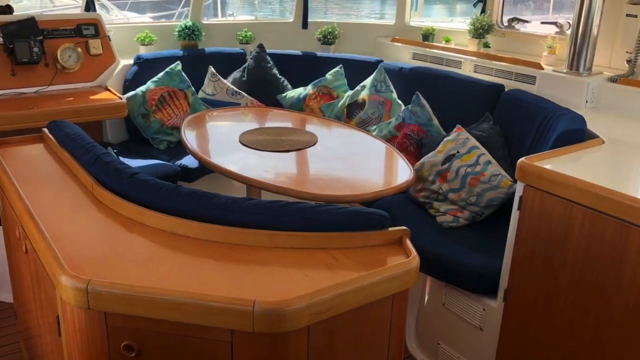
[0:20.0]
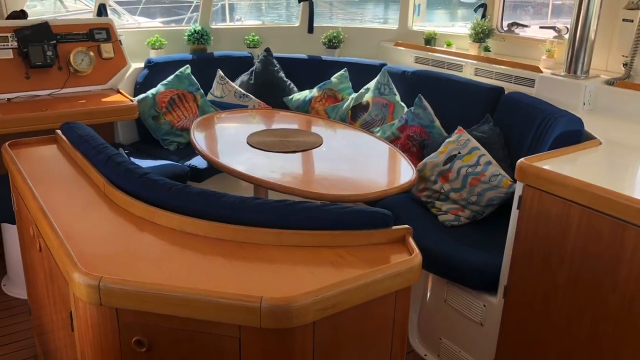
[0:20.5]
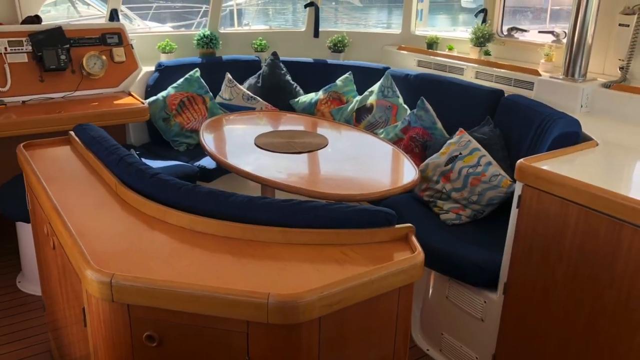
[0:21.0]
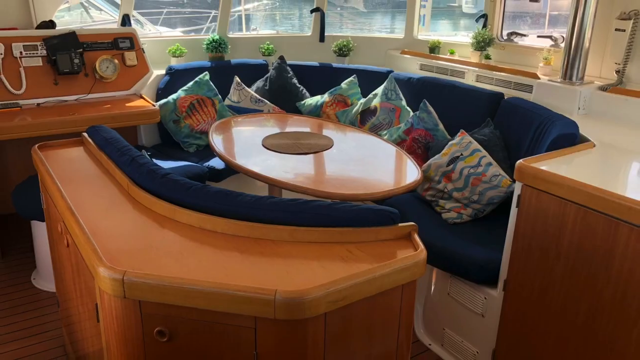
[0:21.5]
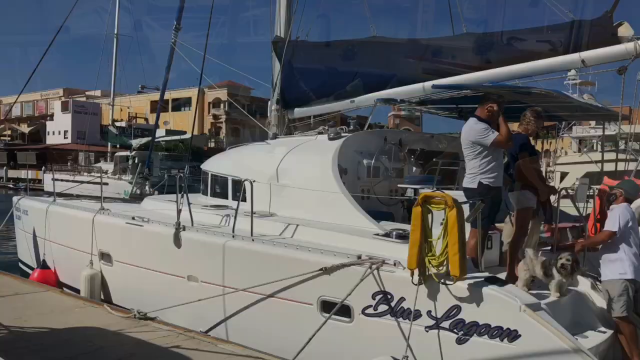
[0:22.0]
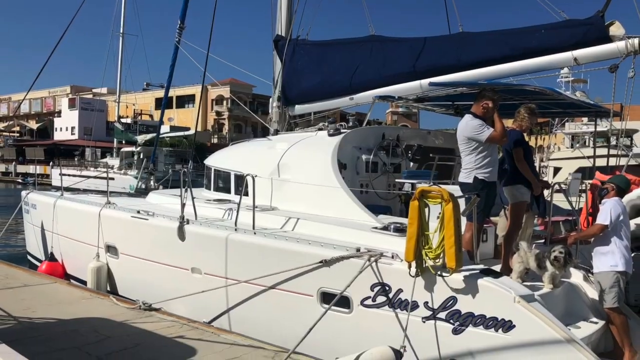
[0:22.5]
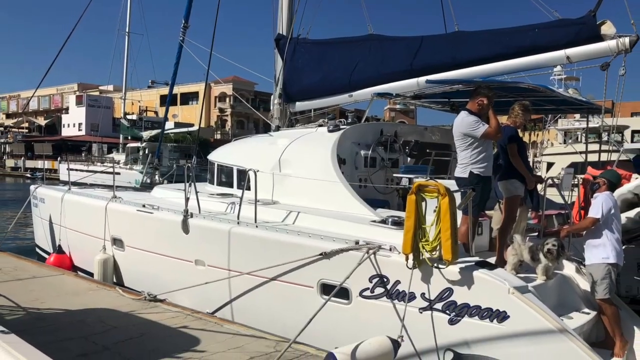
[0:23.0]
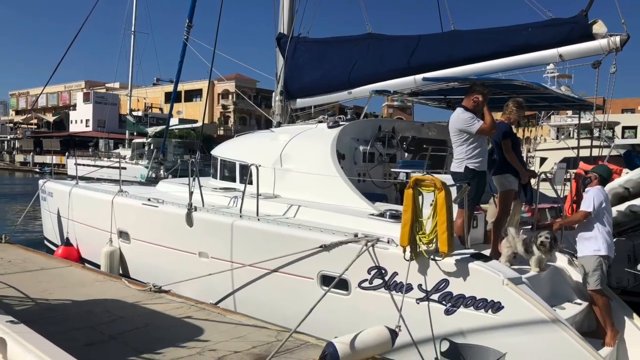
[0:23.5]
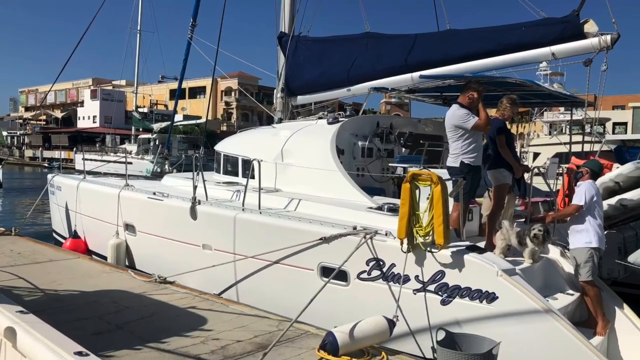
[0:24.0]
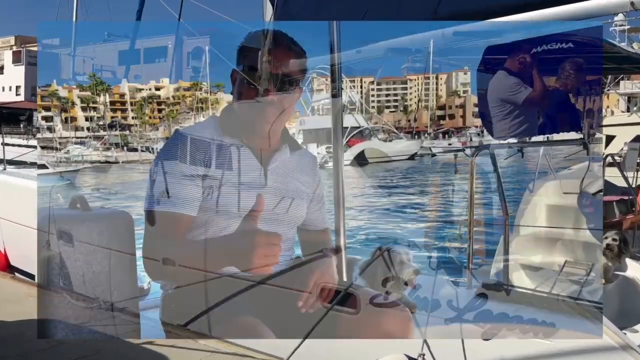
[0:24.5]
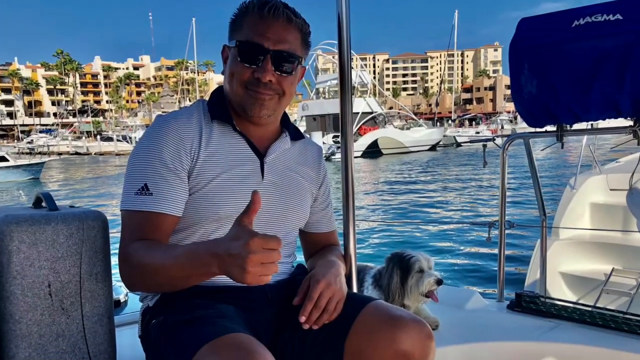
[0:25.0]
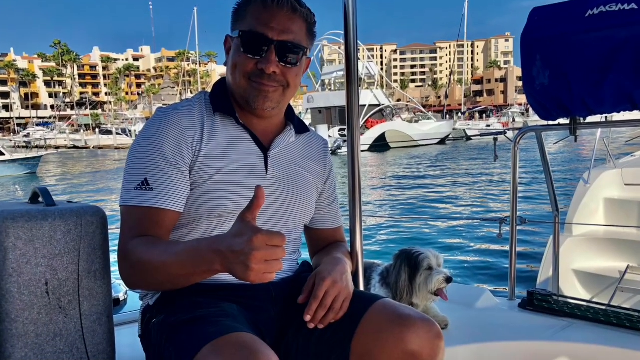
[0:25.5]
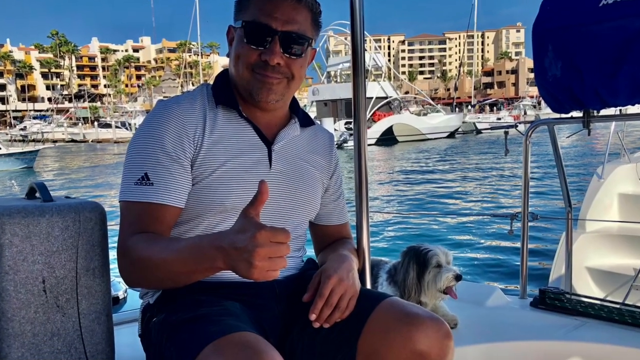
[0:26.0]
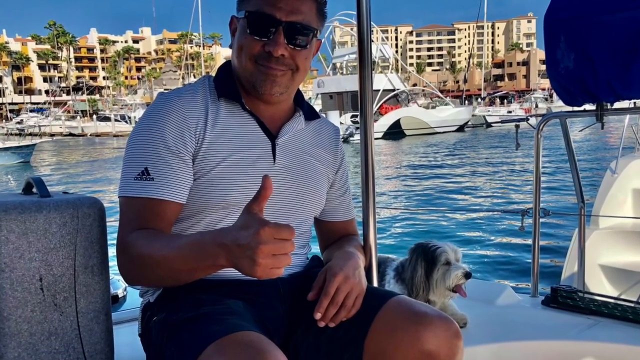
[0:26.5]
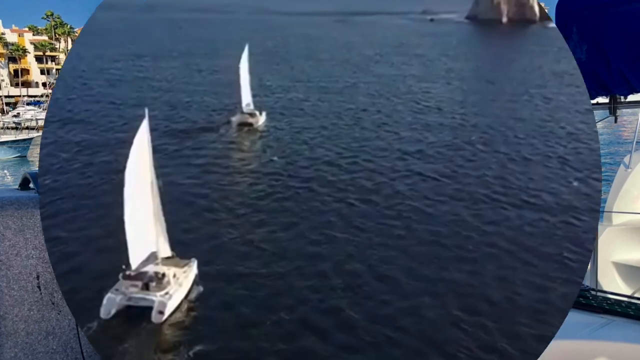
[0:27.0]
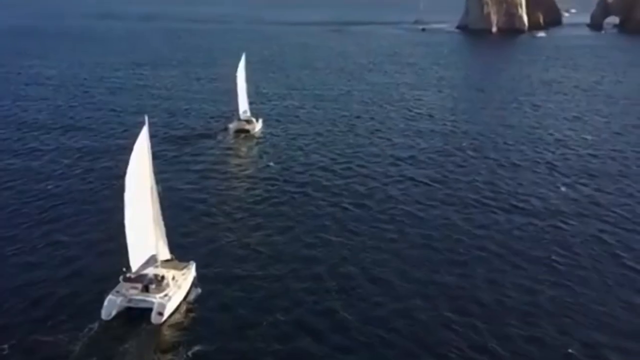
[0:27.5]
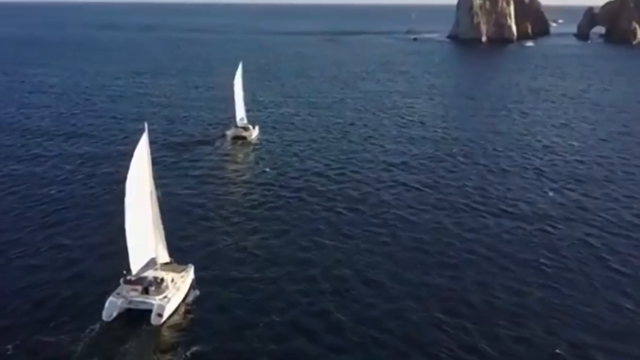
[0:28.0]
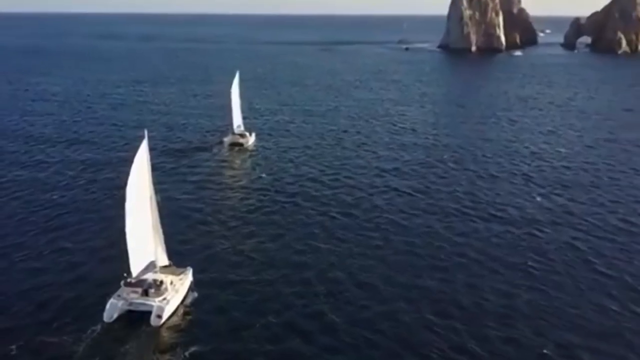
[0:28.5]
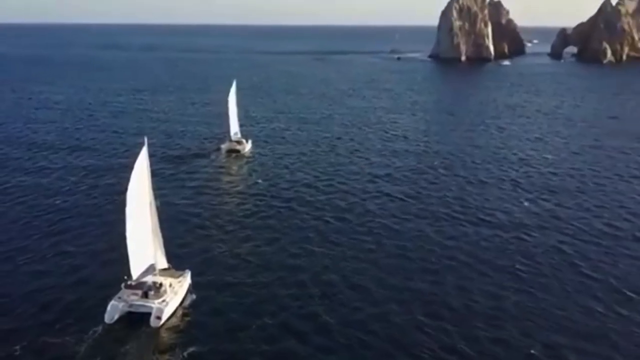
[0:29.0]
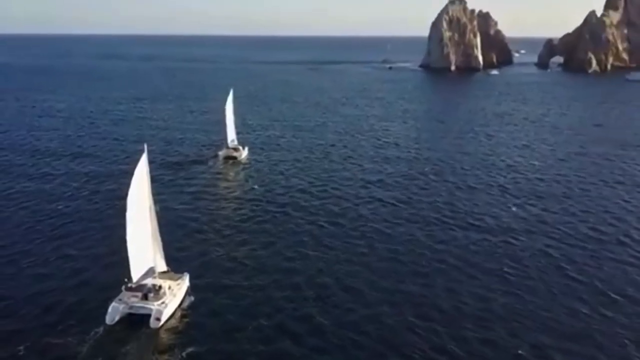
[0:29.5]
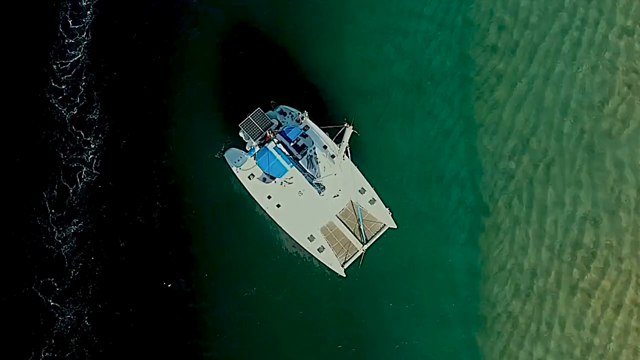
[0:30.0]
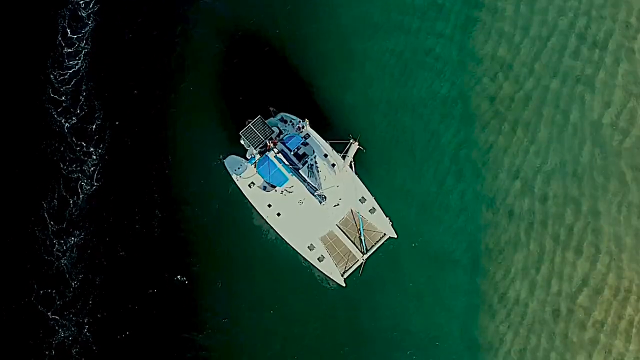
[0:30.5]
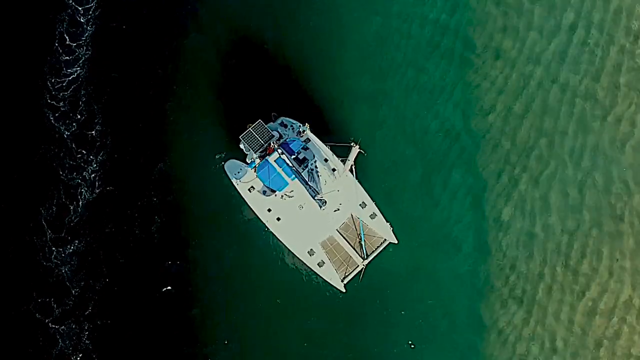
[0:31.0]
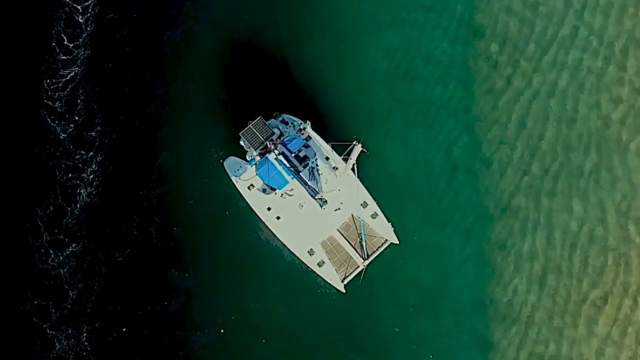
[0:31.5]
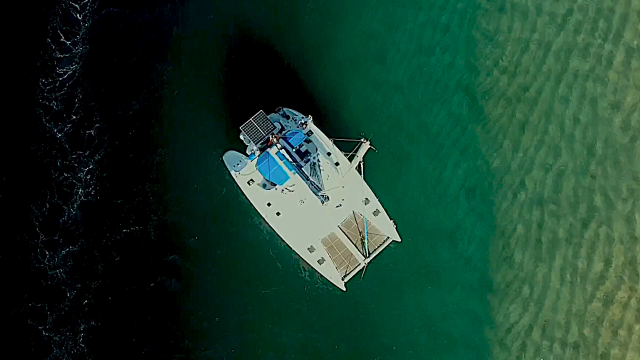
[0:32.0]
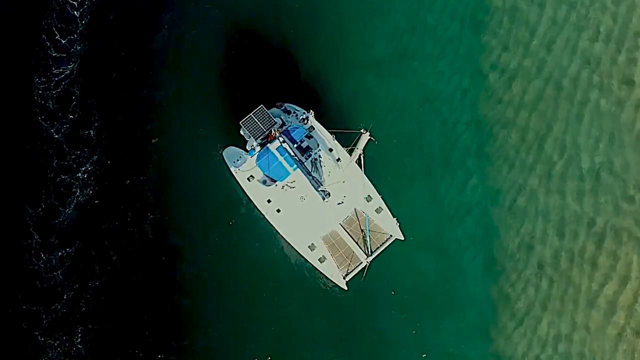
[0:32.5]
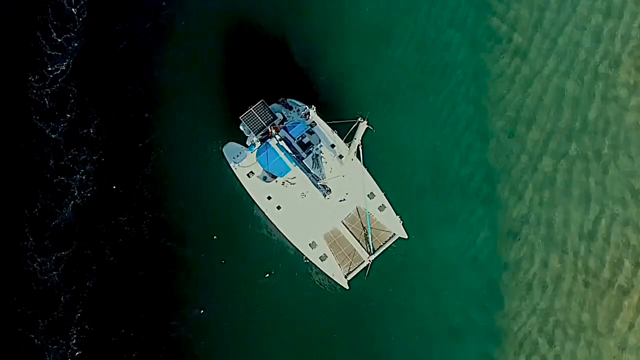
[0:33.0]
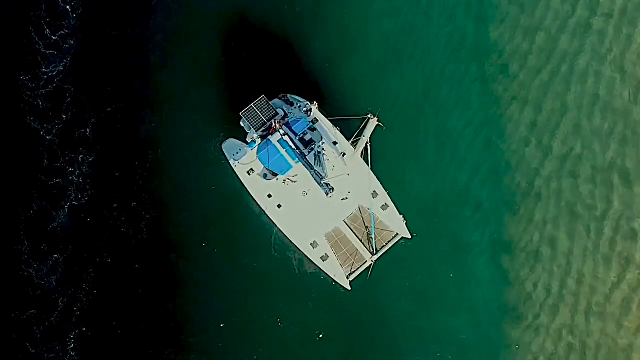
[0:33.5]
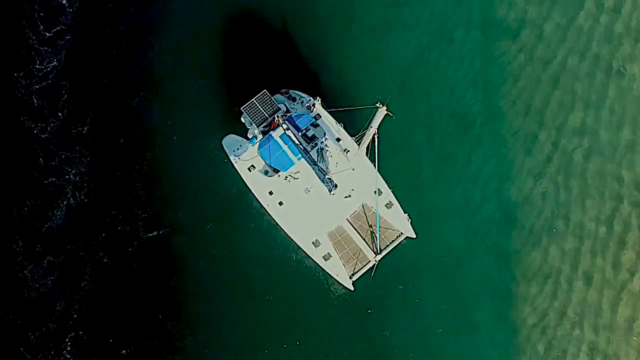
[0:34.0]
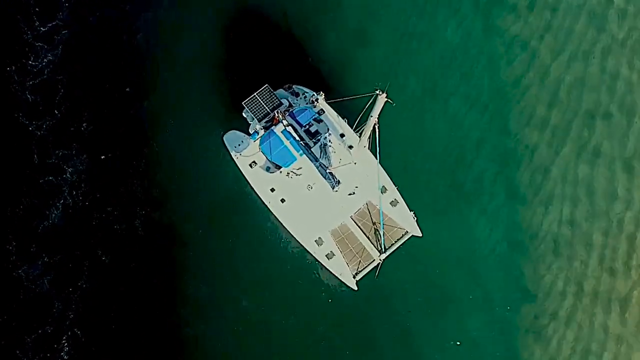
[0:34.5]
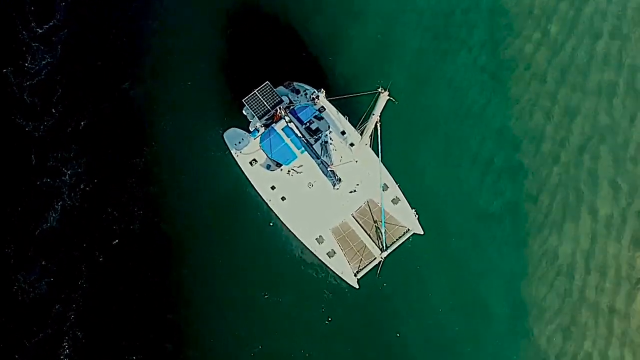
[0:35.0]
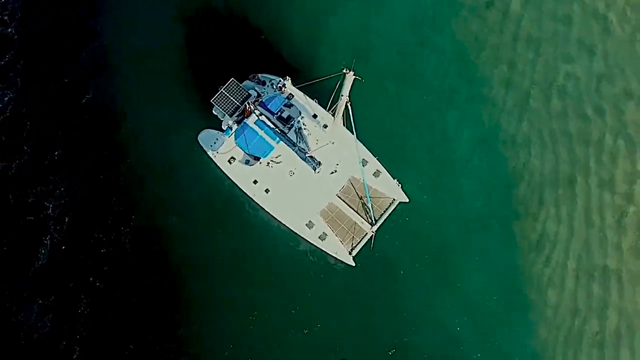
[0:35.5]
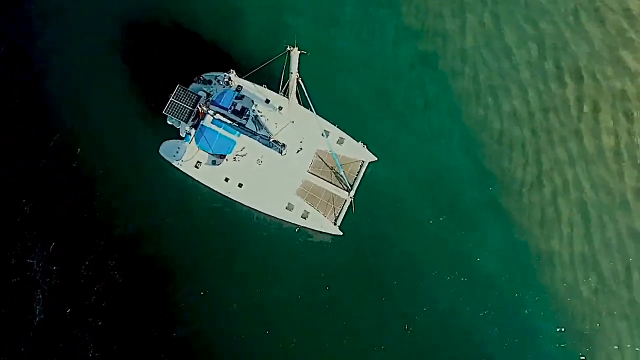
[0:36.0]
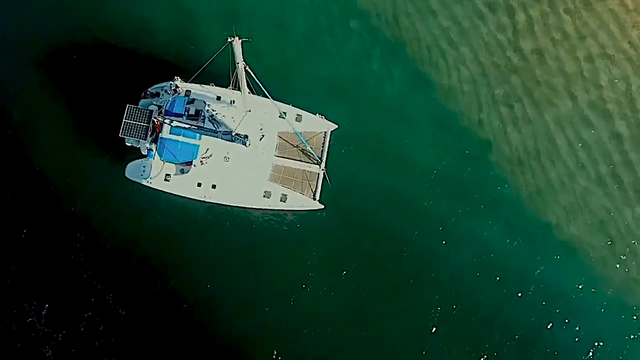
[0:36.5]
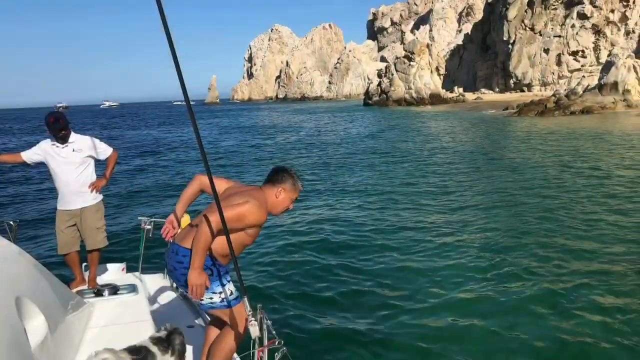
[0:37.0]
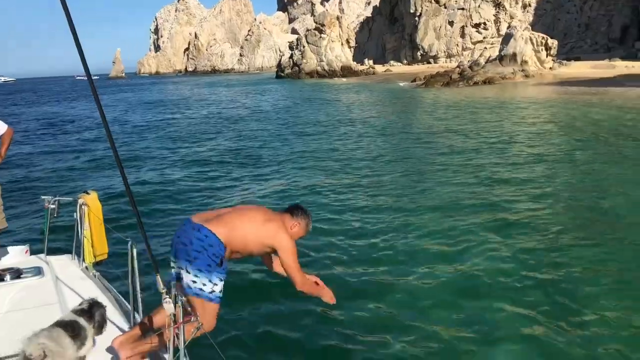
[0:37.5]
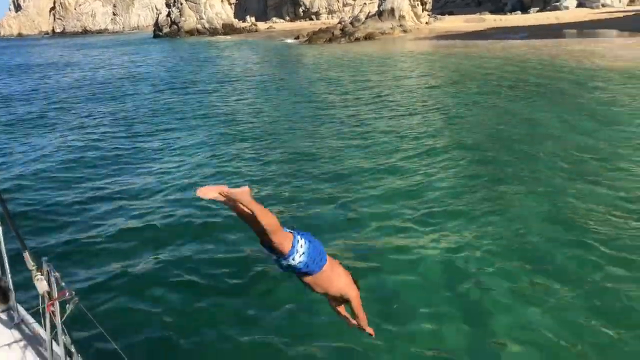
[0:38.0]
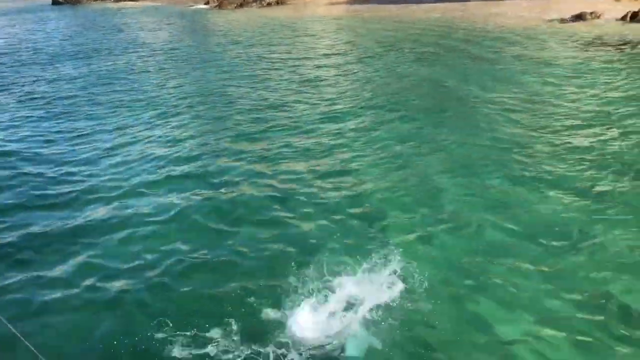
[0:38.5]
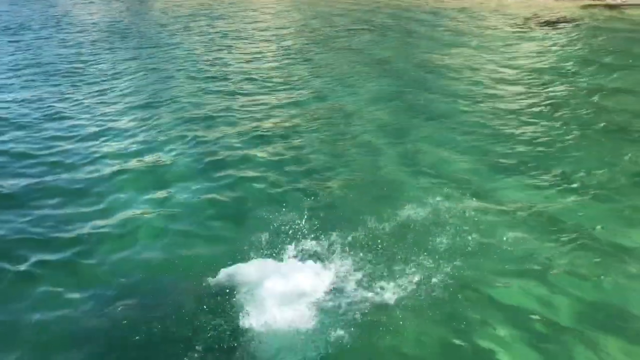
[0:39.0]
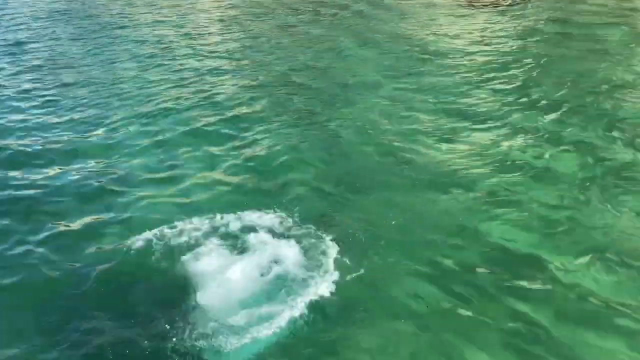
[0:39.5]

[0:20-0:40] A small, round, brown wood table is surrounded by a blue couch that goes completely around it except for one small gap where one can get in to the table. The video cuts to a picture of a white boat with buildings and other boats, all white, in the background; people stand on the back of the boat. Next is a picture of a man sitting in a boat chair, wearing a short-sleeved white shirt and giving a thumbs up. To his left, a small, hairy white and black dog lies on the boat deck. In the background are the other boat and blue water. A drone shot then shows two white sailboats. Another shot shows a white boat filmed by the drone directly above it, shooting straight down.